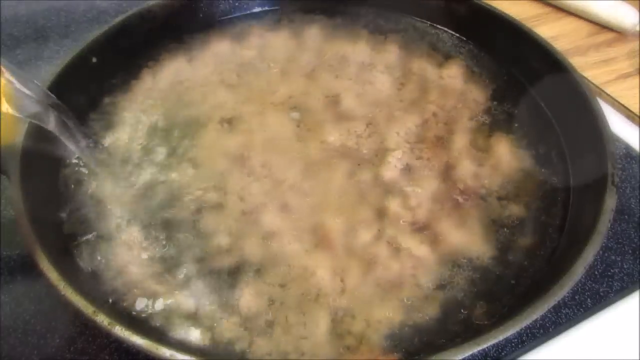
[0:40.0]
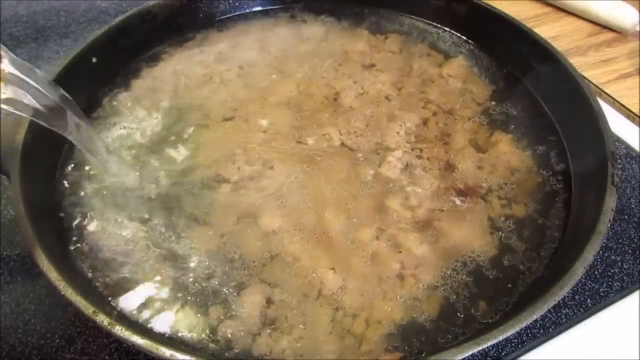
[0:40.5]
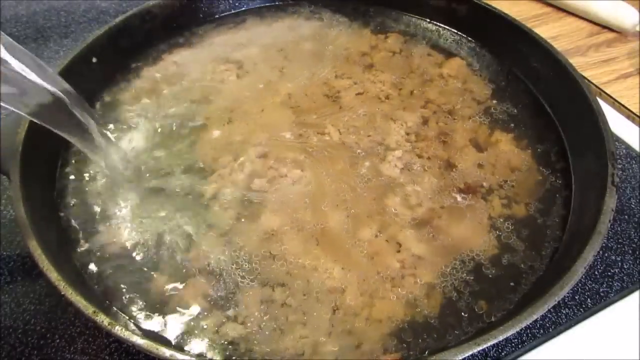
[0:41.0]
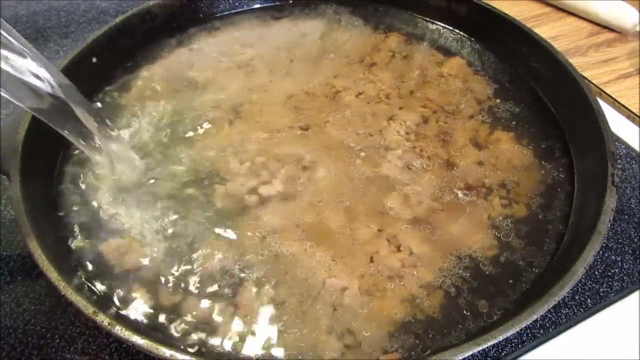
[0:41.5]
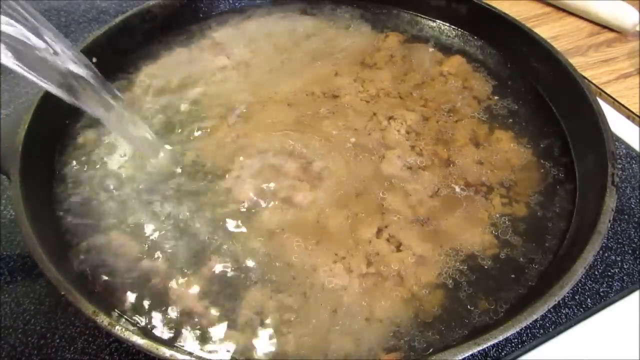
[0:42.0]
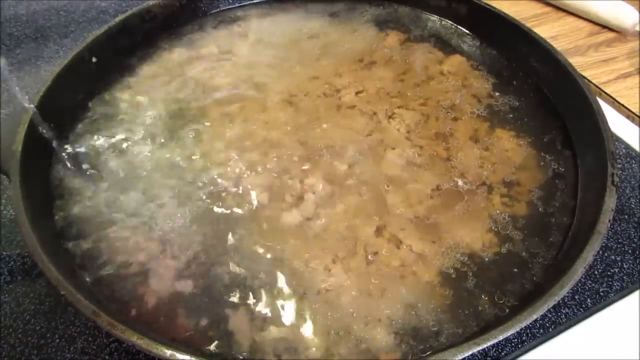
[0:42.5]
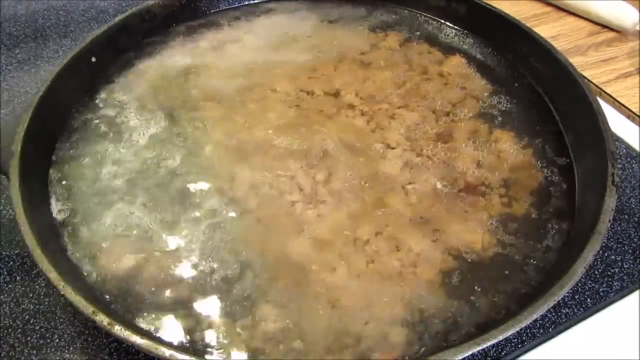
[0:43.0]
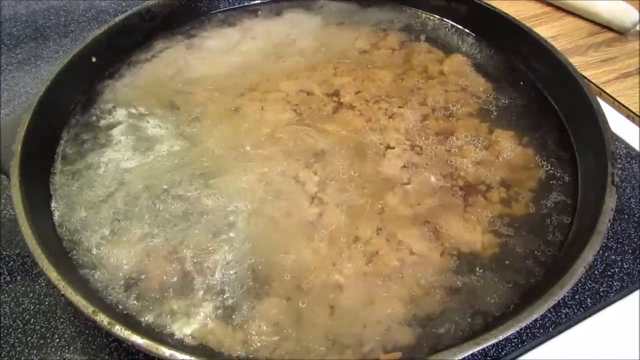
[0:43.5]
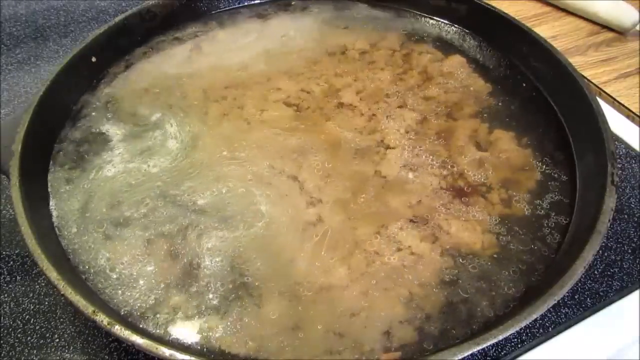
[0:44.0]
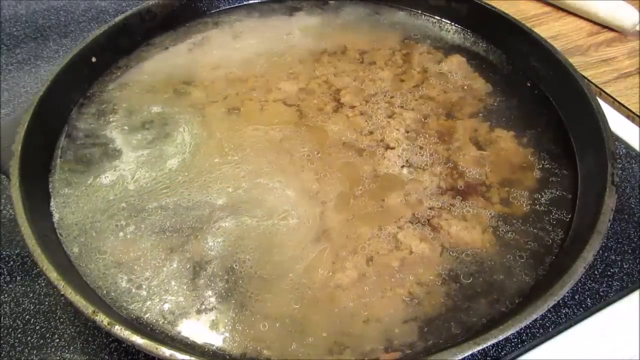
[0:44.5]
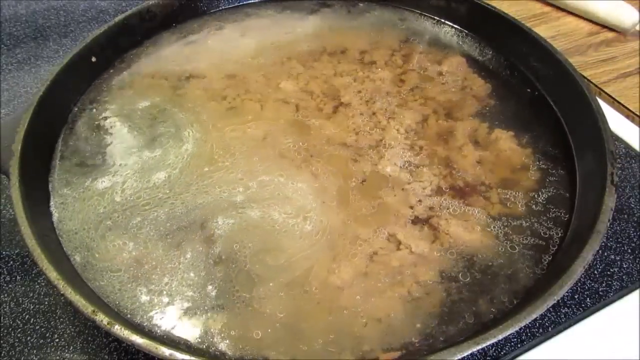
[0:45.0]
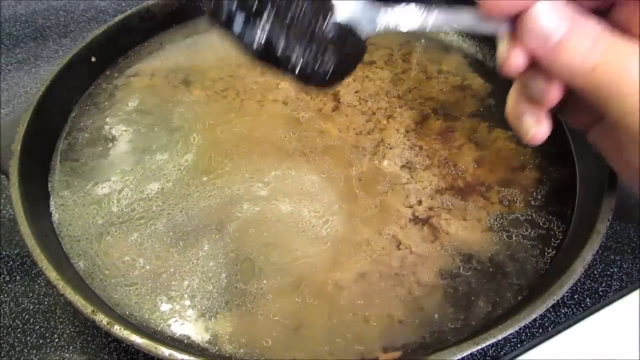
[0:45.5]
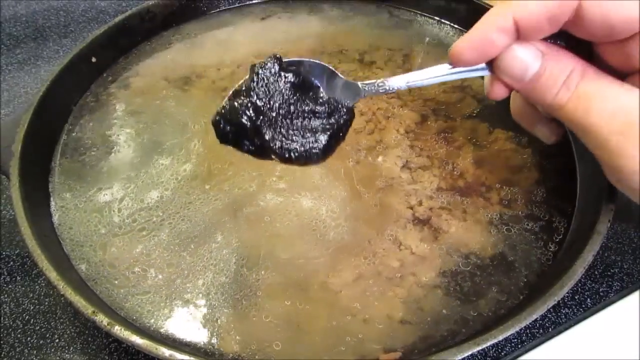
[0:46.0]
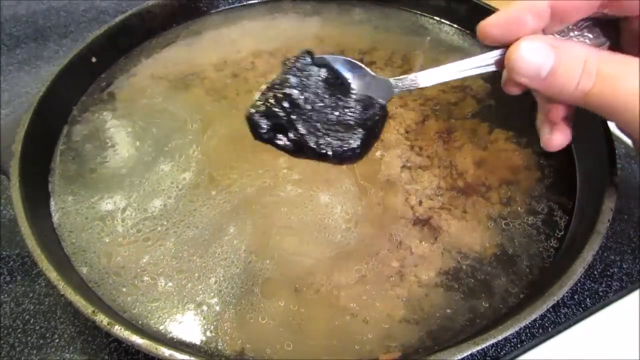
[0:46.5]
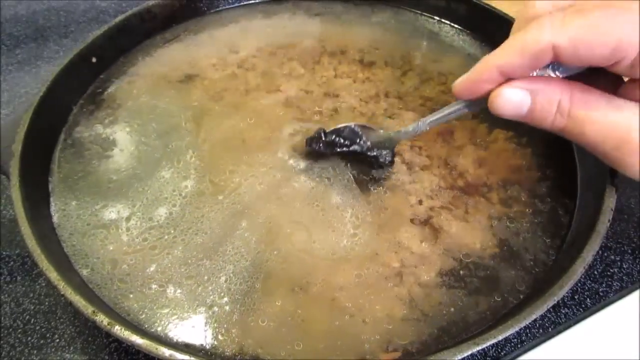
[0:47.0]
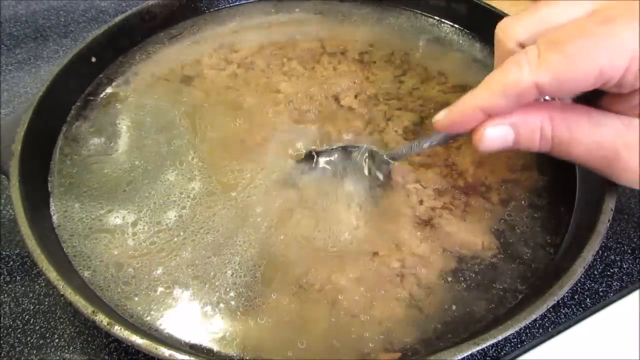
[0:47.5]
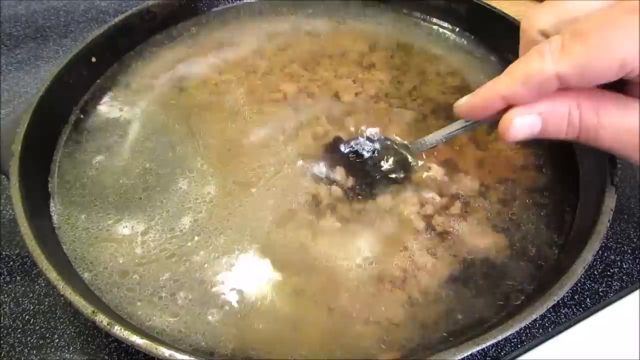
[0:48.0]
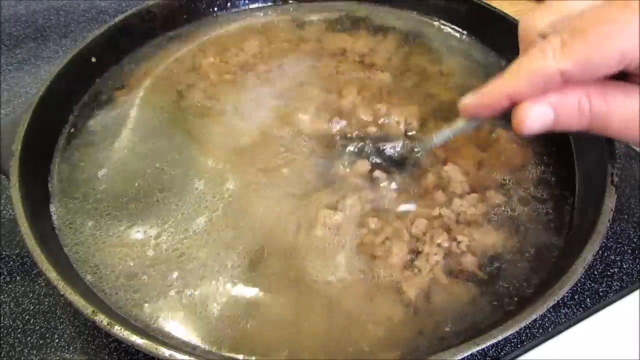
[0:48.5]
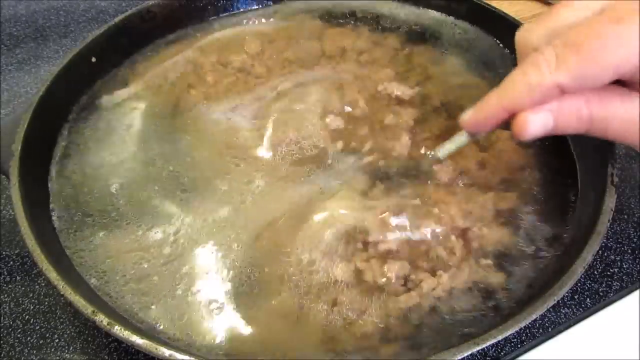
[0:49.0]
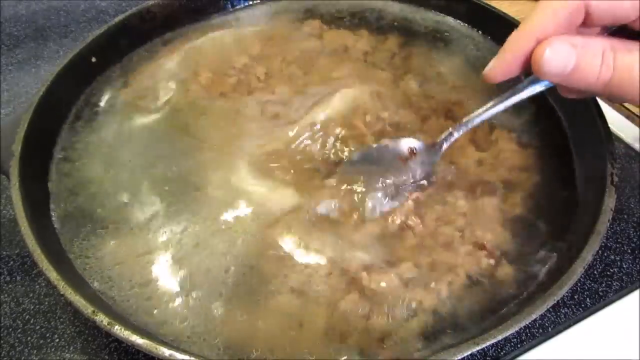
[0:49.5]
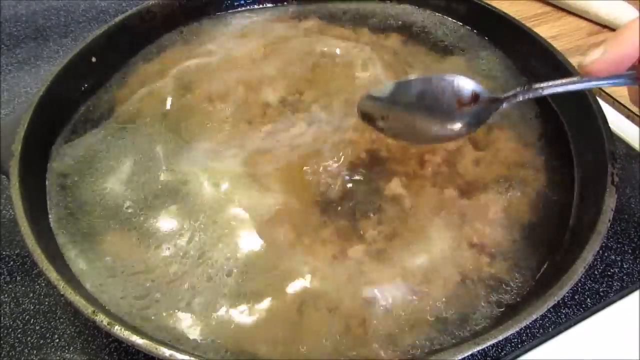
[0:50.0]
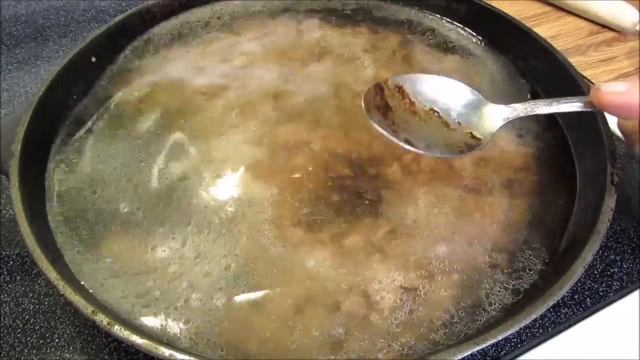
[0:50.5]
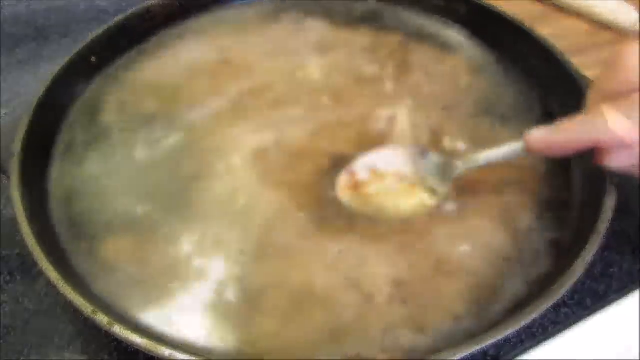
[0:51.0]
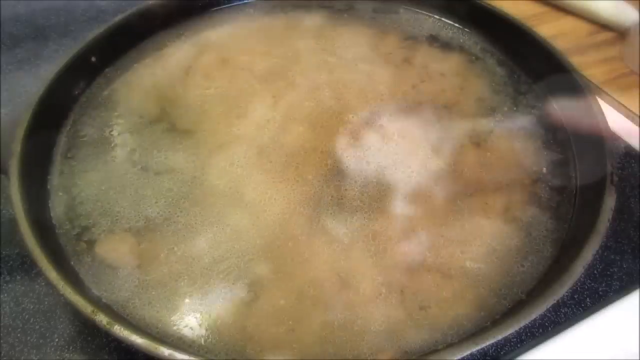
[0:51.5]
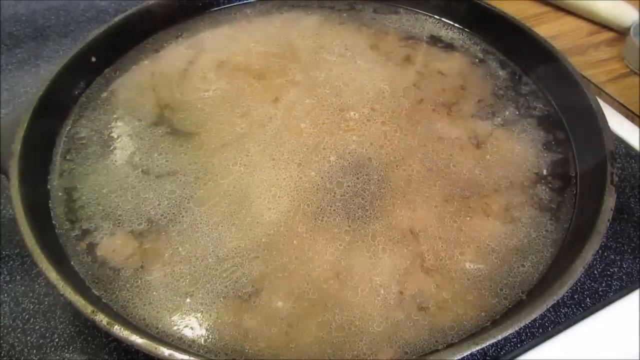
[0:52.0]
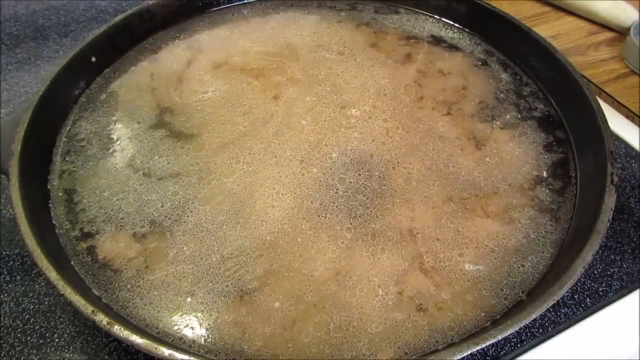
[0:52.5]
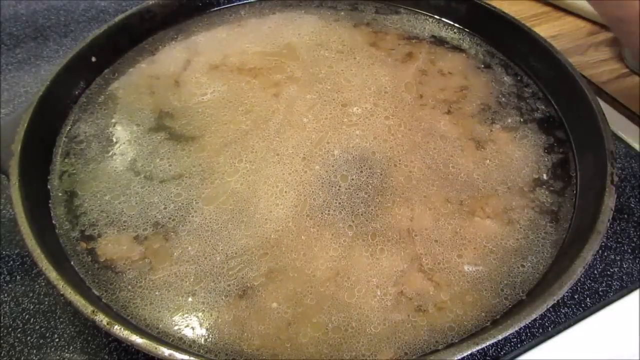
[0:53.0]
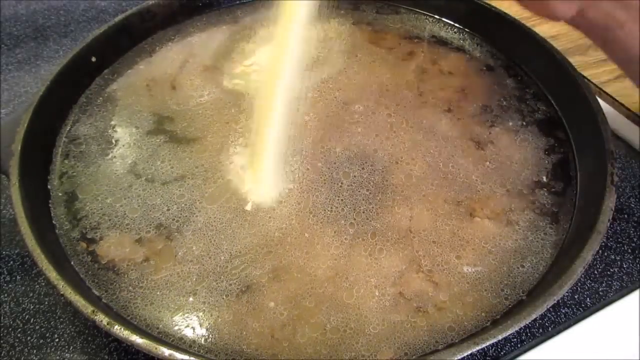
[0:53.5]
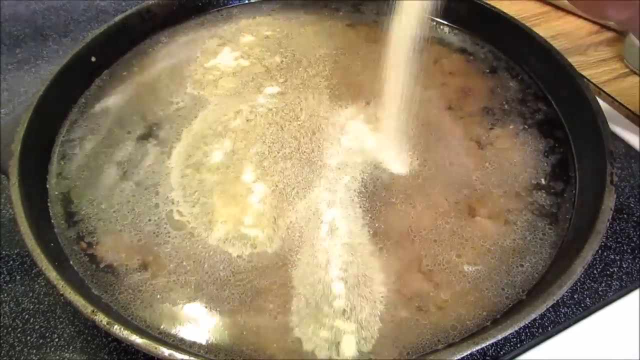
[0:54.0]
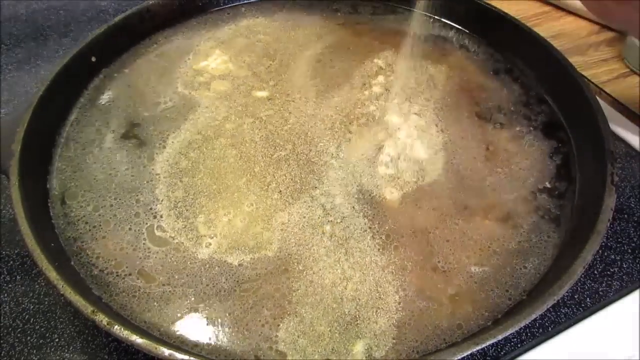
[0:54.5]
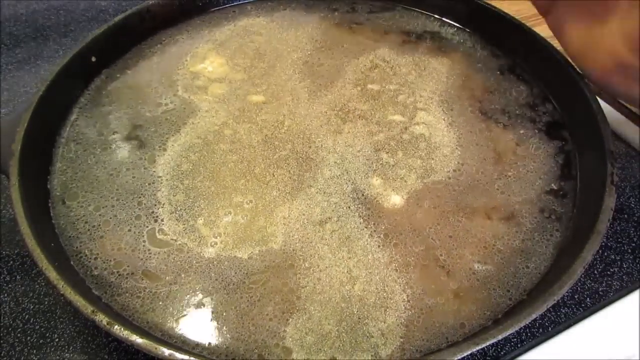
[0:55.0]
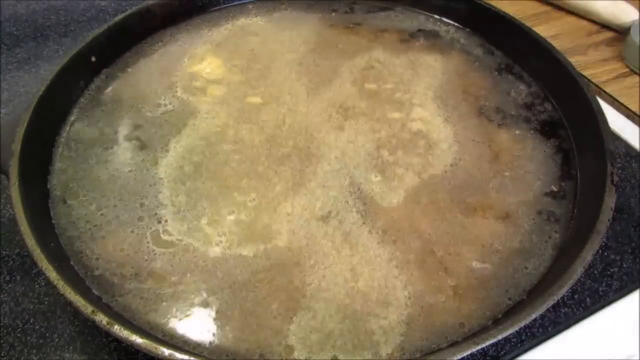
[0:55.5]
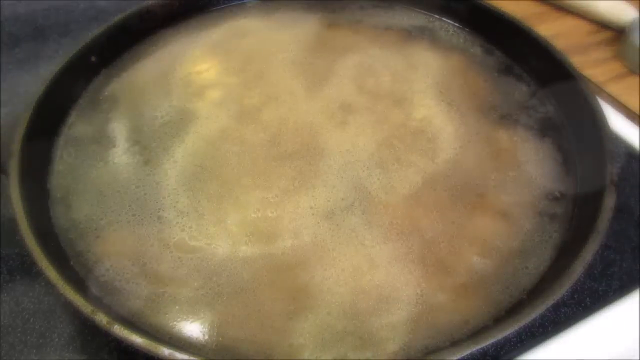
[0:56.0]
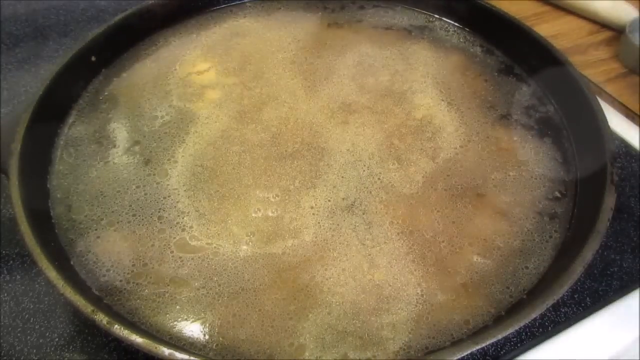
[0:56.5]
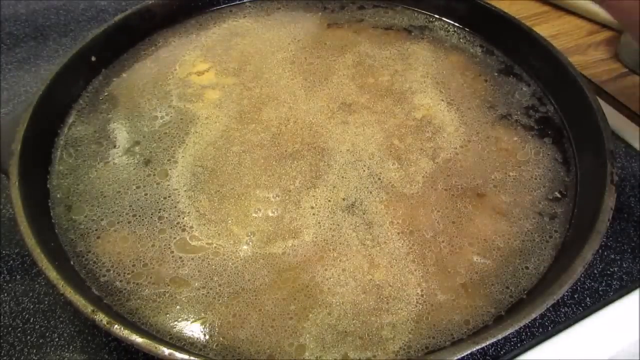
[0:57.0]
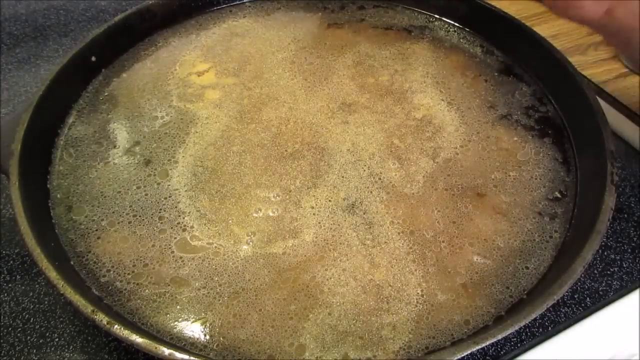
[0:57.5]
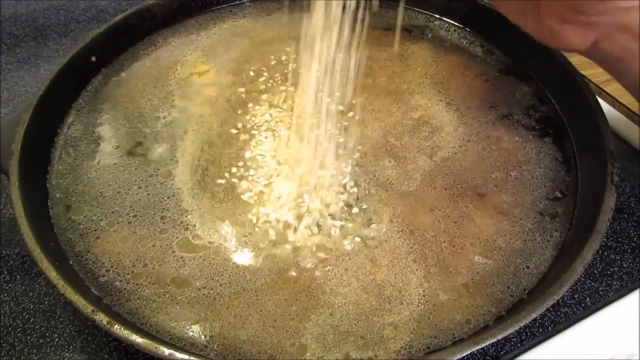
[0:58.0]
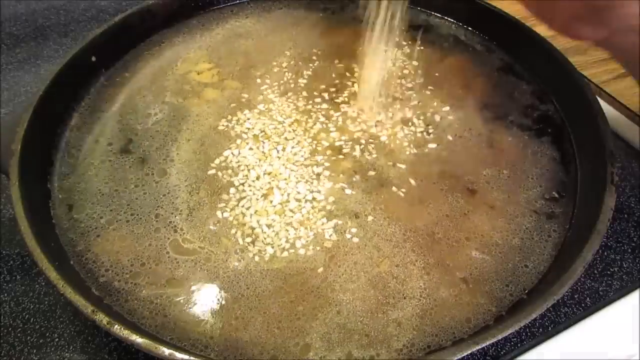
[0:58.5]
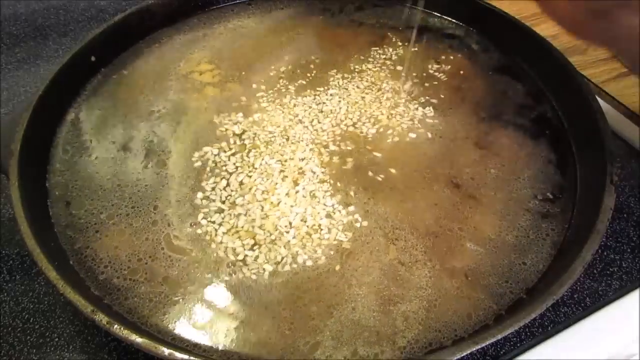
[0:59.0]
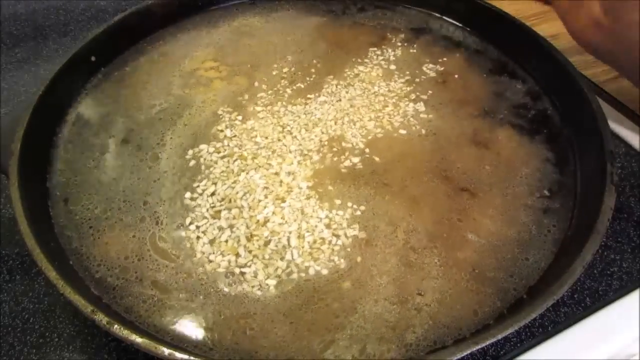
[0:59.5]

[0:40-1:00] Water is poured into the sautéed mince, which did not turn brown, until the pan is almost full. The water comes from an open bottle with a yellow ring around the opening. Spices are then added, starting with a tablespoon of tomato paste, which is left to sit in the mince without mixing. Next, a powder is poured in, and this time it is mixed. Another granular spice, brown in color, is added, and the cook is almost mixing. A wooden board is right next to where the cooking and mixing take place.